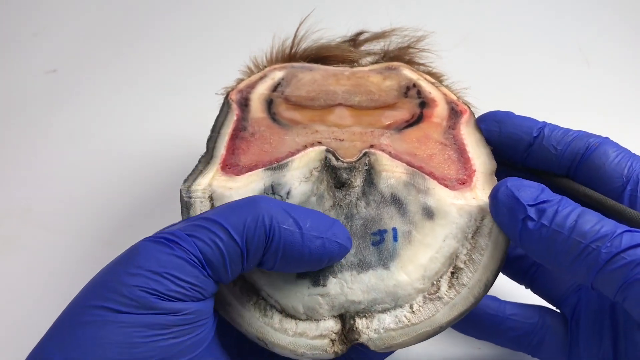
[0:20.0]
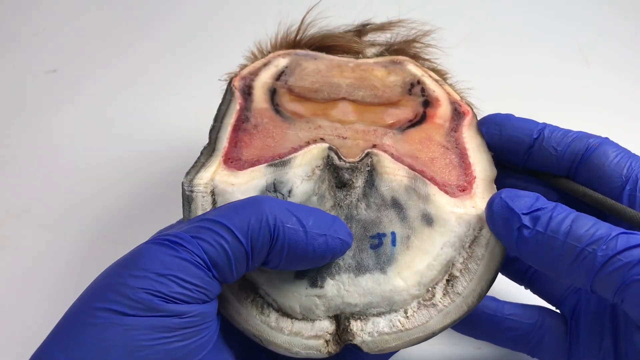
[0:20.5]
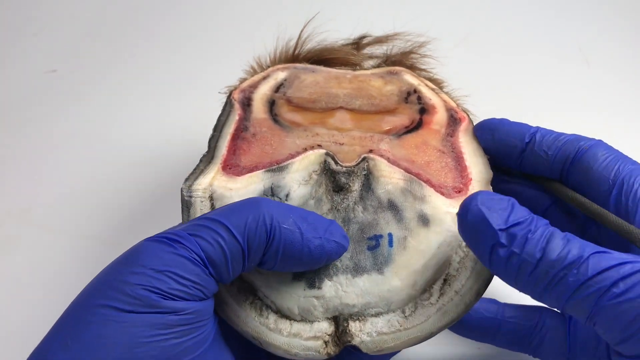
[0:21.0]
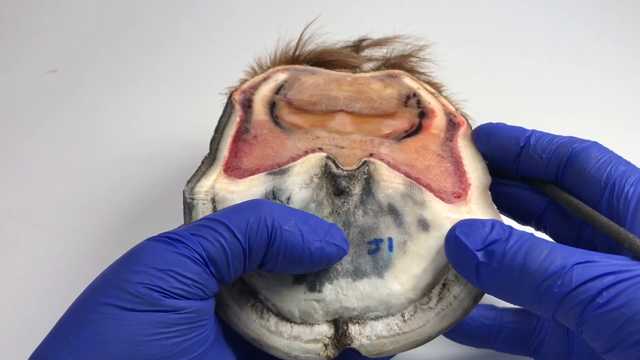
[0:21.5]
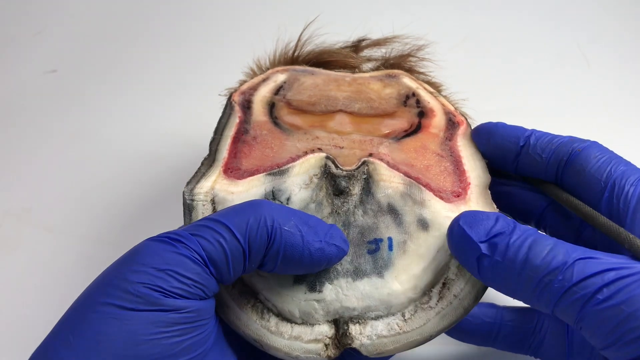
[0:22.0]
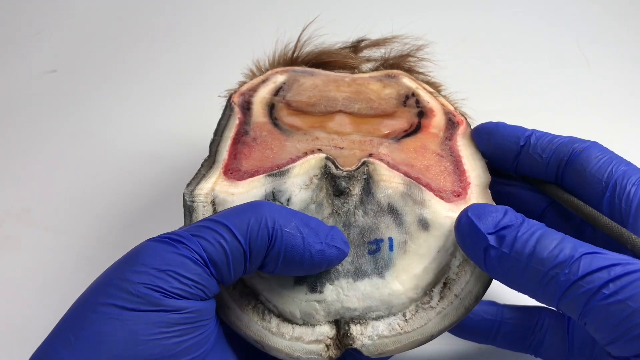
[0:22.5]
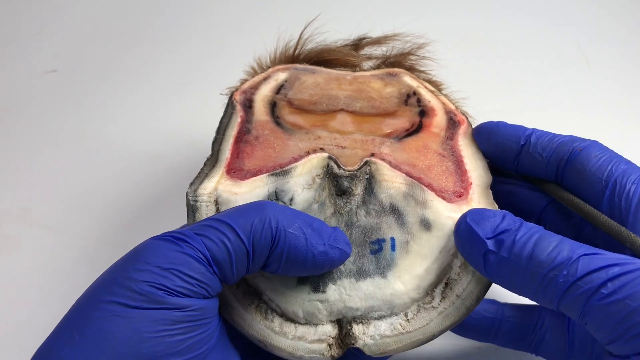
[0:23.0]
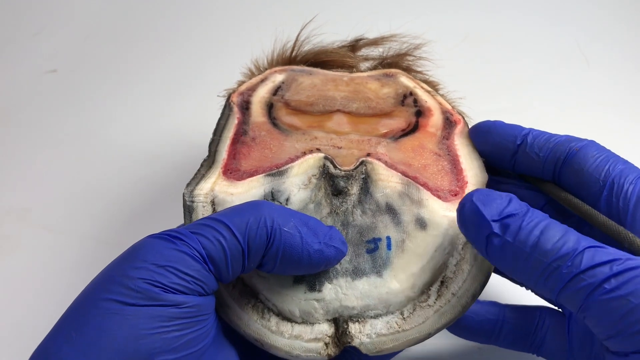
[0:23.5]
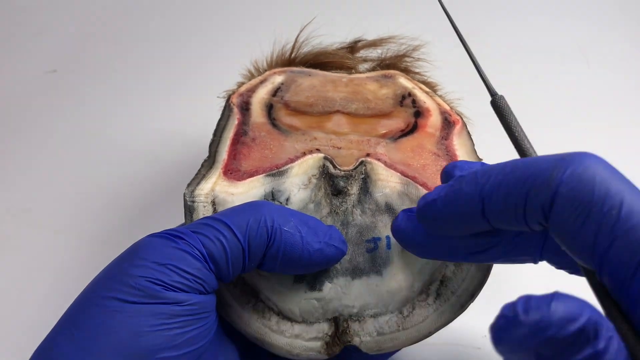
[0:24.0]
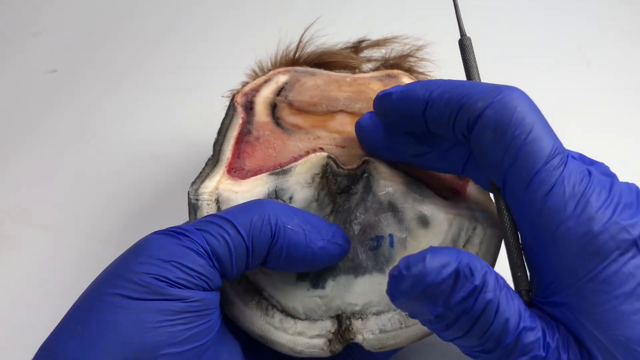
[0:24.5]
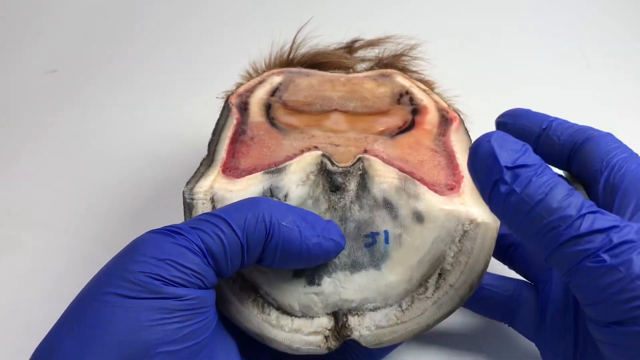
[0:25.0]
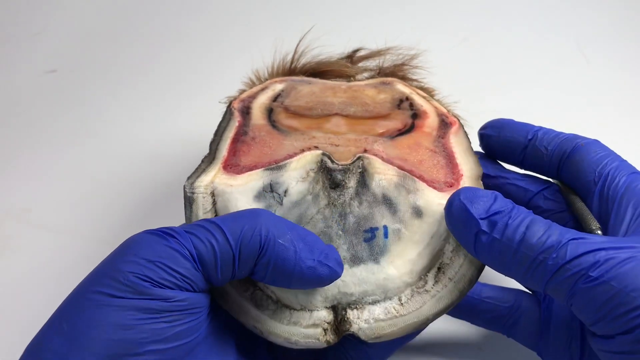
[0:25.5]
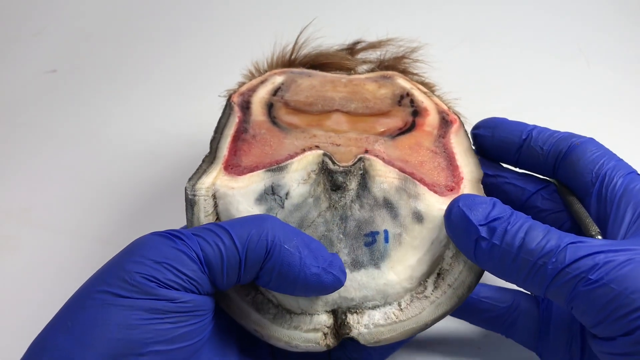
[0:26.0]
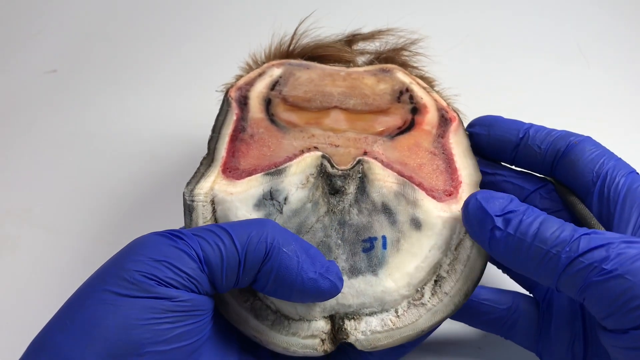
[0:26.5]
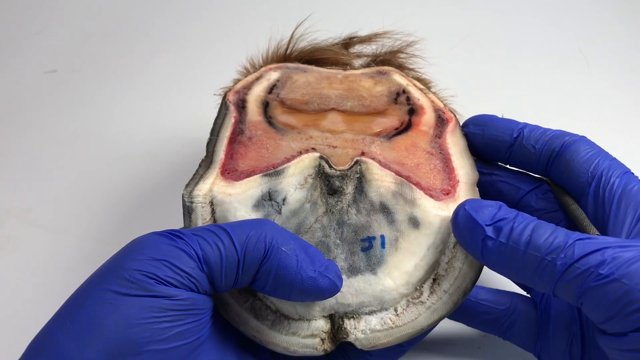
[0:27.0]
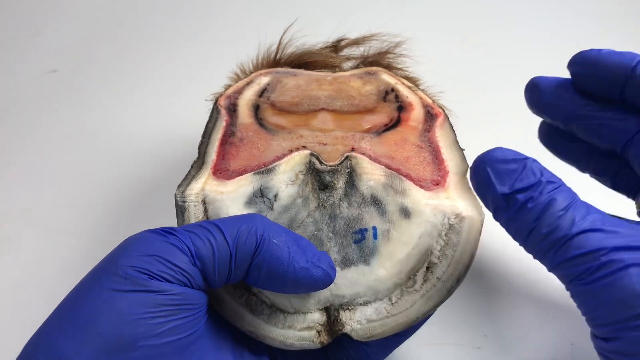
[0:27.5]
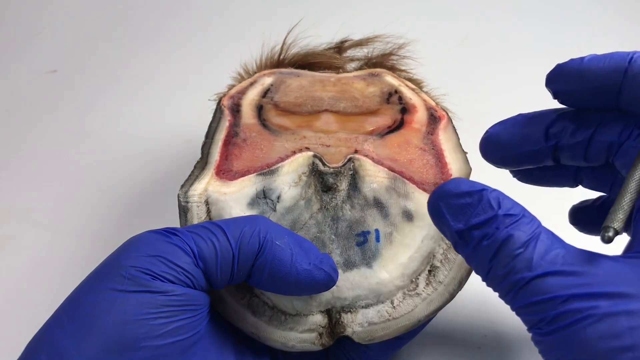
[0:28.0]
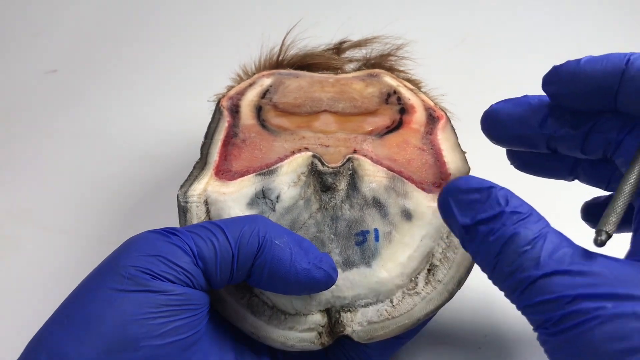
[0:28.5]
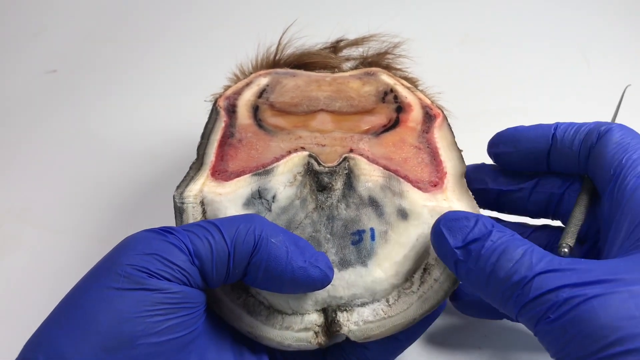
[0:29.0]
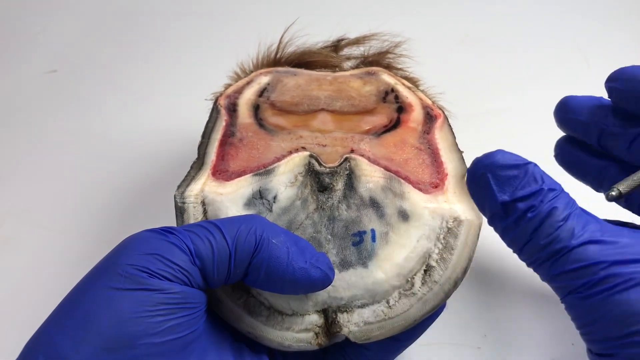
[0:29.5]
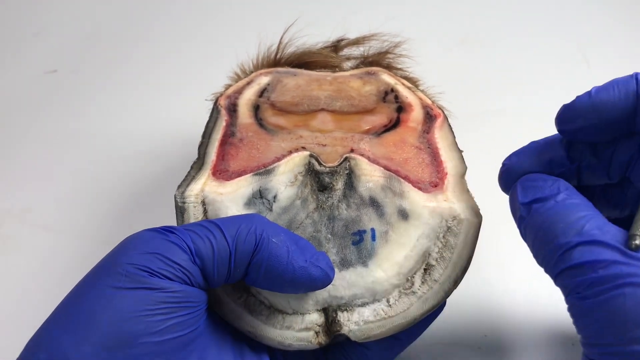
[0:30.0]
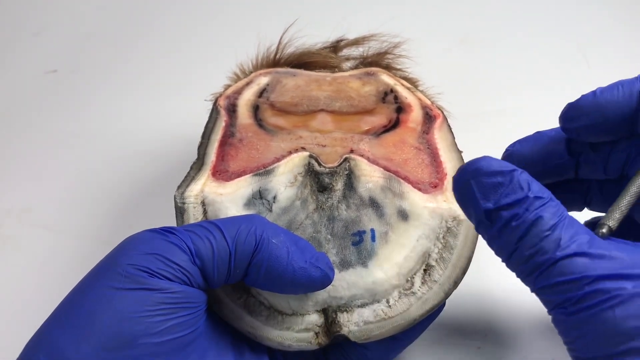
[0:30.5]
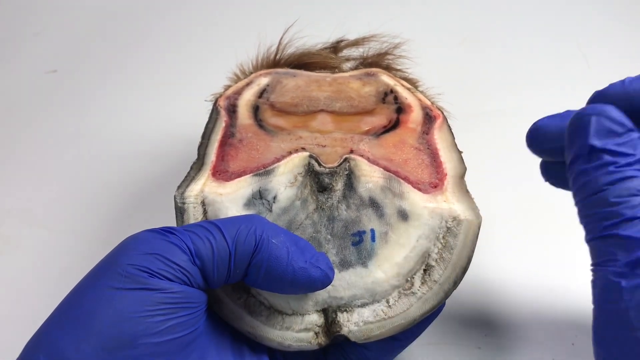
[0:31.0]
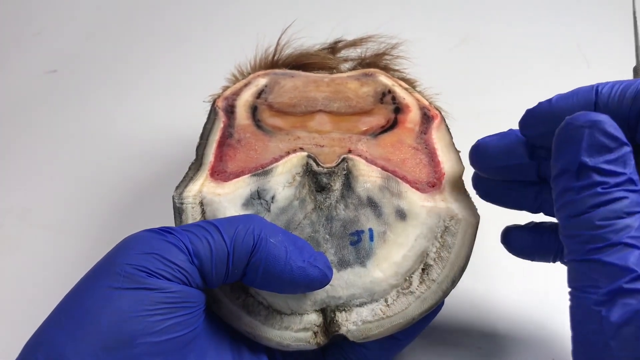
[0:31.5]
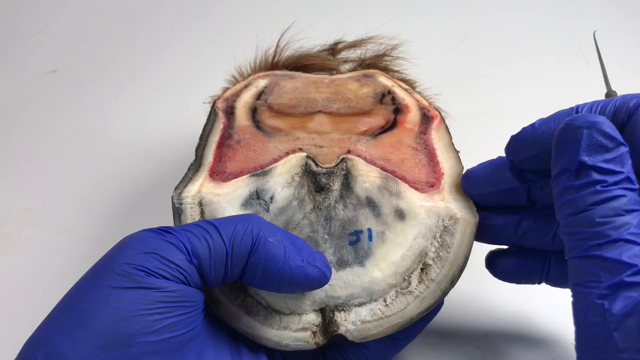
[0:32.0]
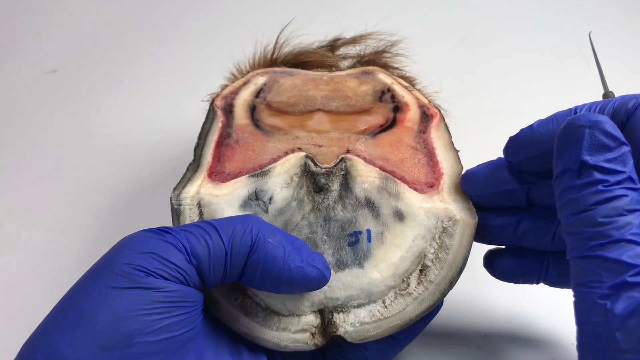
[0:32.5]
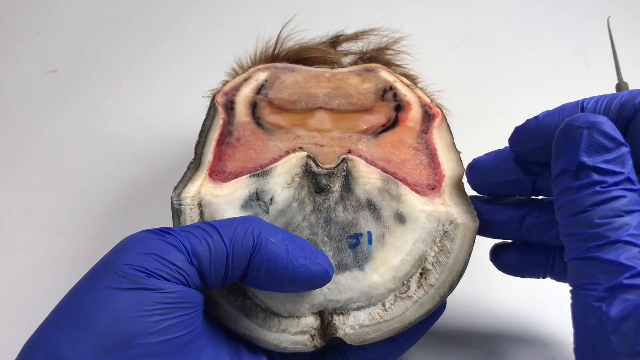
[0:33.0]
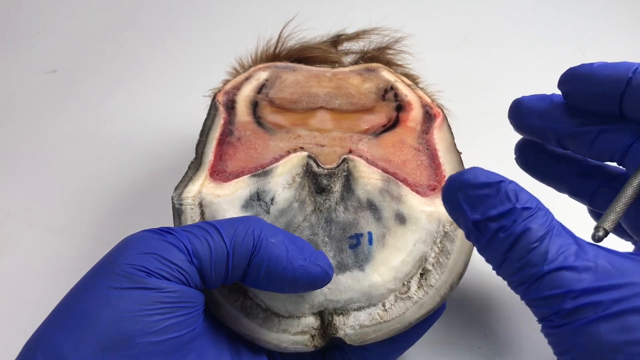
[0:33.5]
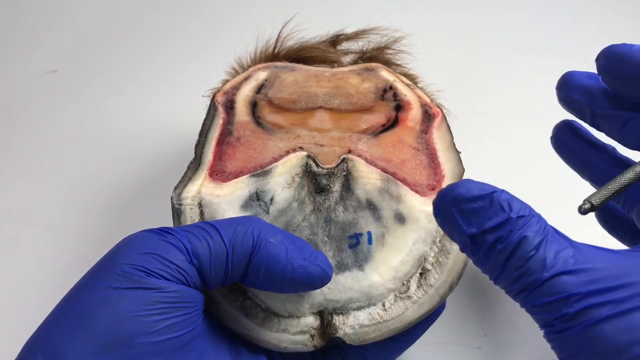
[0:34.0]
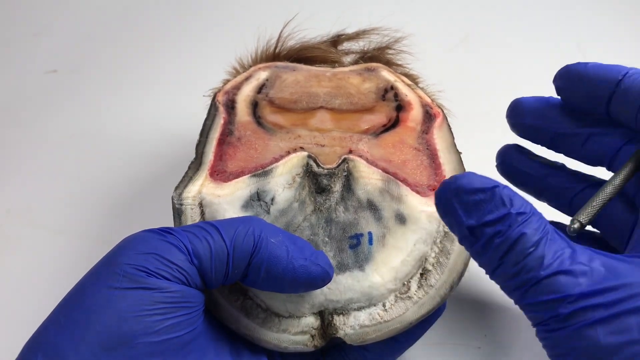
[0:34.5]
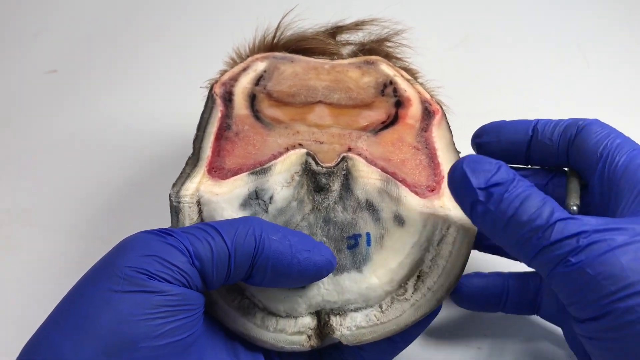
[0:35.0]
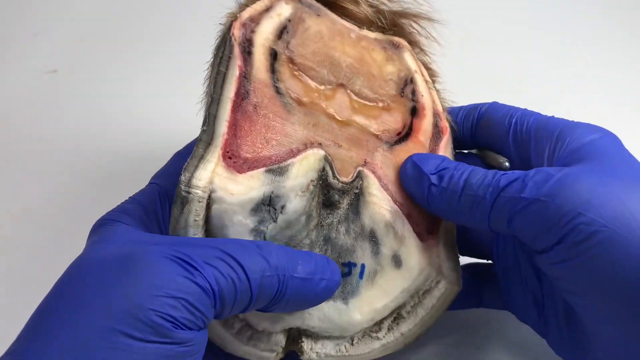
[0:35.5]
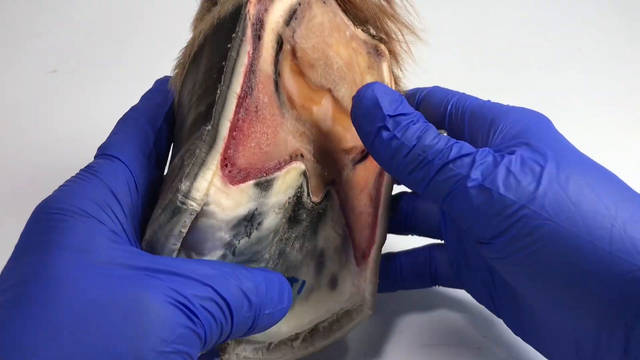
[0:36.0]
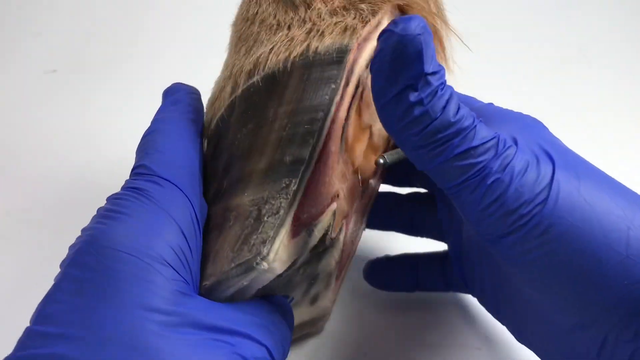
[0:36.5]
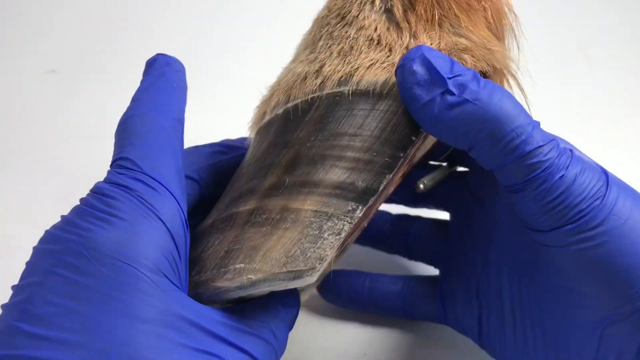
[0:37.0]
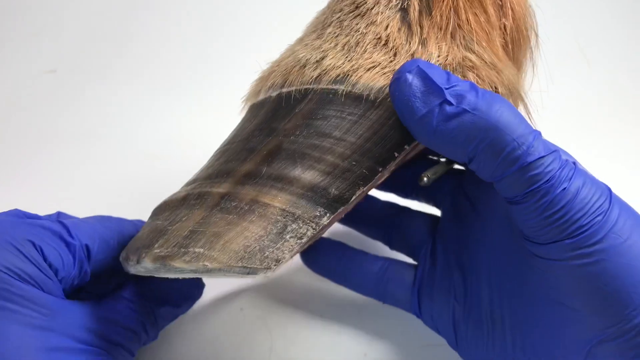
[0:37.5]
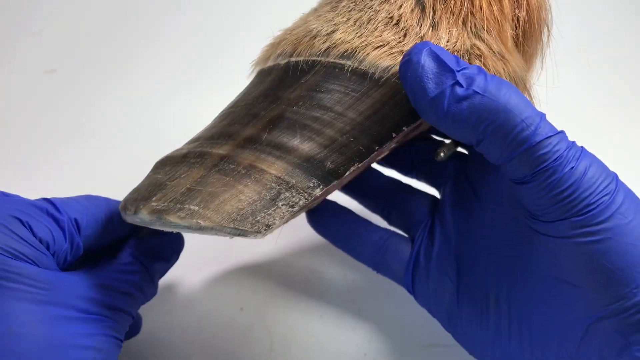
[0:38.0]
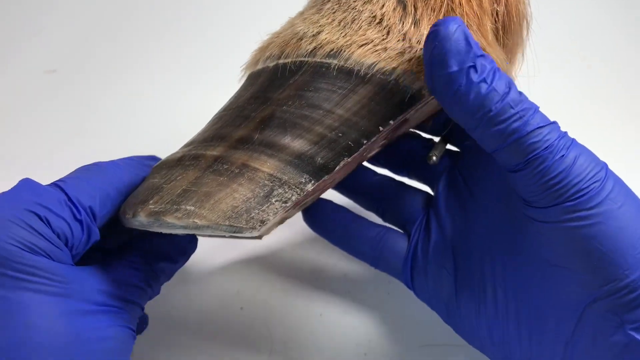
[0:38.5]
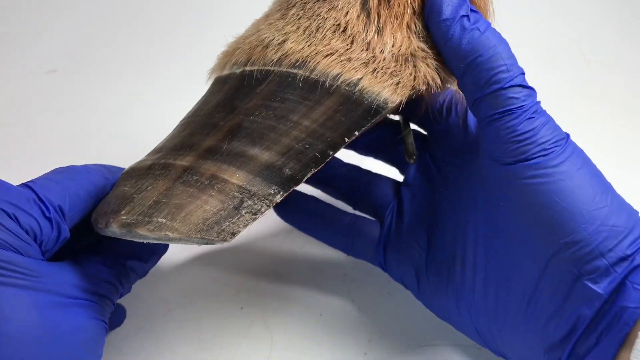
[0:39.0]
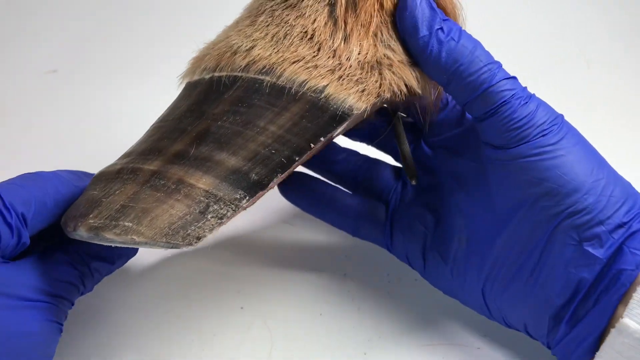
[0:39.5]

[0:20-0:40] Someone wearing medium to dark blue sterile or surgical gloves holds the horse hoof. It appears to be only part of a horse, possibly a diagram or possibly an amputated leg used for science. The bottom of the hoof is round; its top third is a pinkish reddish, mostly pink, color, and the bottom half is white and gray. "J1" appears to be written on it in blue sharpie marker: the letter J and the number one. The person feels the hoof, moving their fingers and hand. Their right hand seems to hold some kind of needle or long pen tool as they move and touch the hoof. Their hand moves as if enunciating, and then they flip the hoof over.